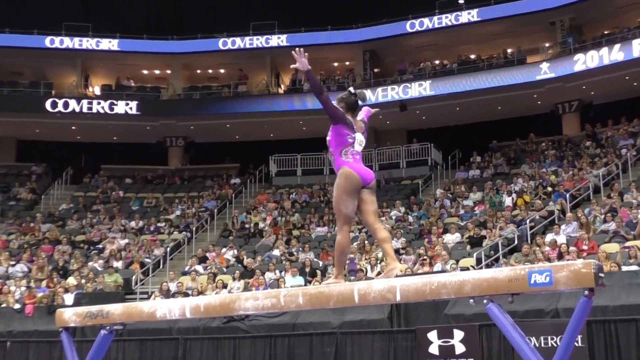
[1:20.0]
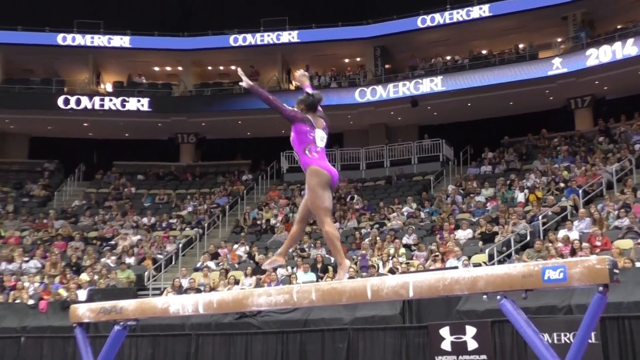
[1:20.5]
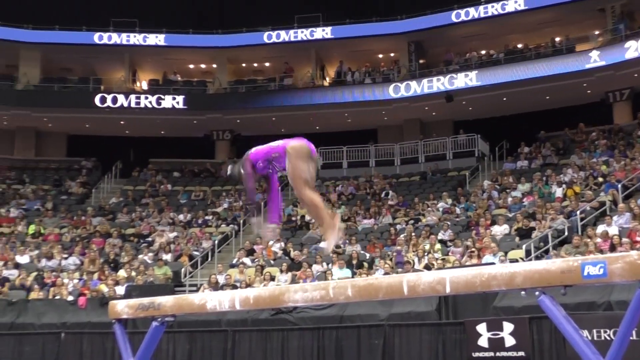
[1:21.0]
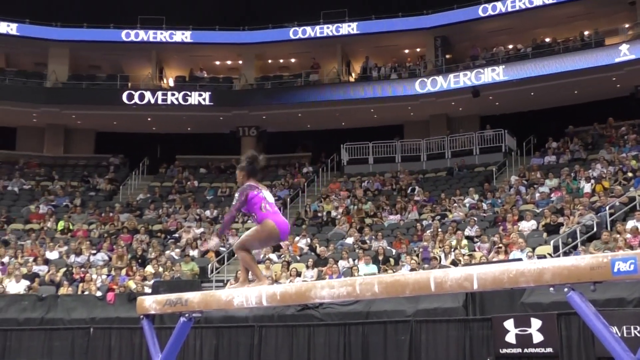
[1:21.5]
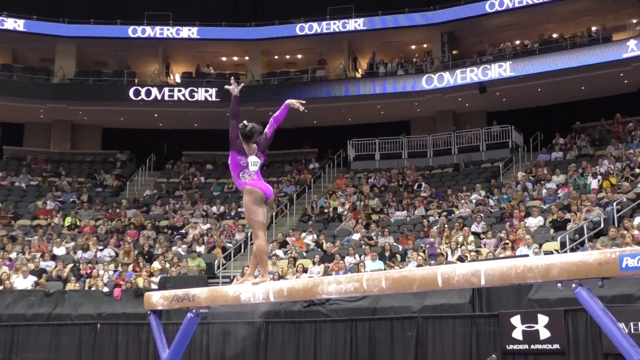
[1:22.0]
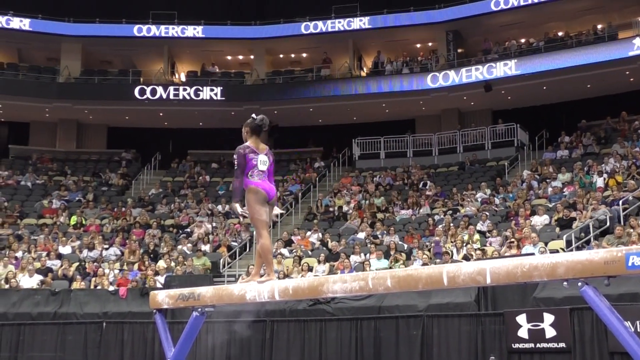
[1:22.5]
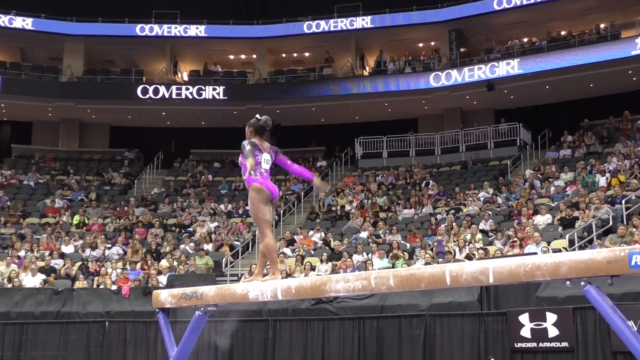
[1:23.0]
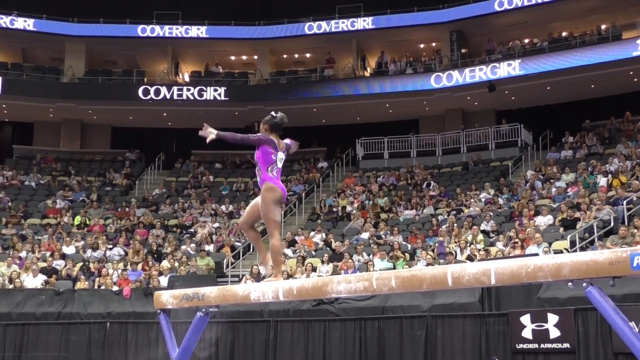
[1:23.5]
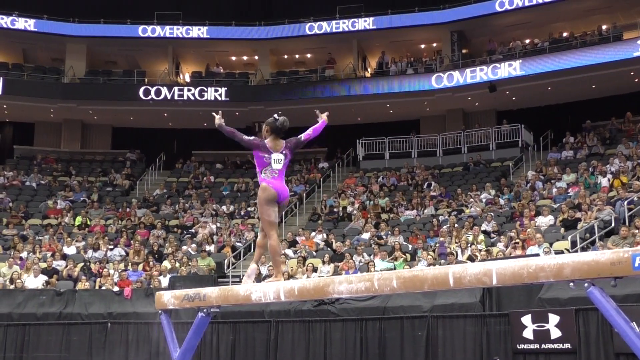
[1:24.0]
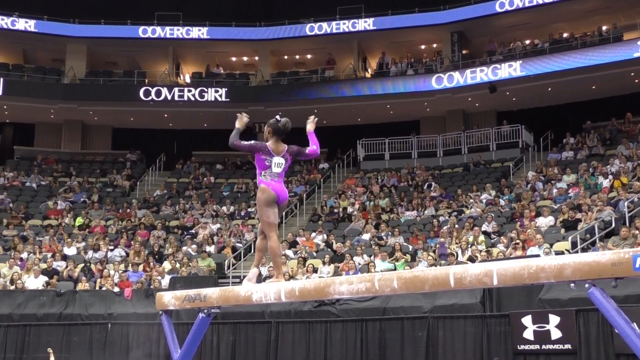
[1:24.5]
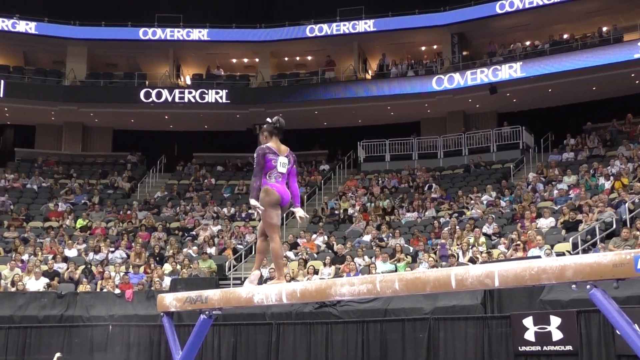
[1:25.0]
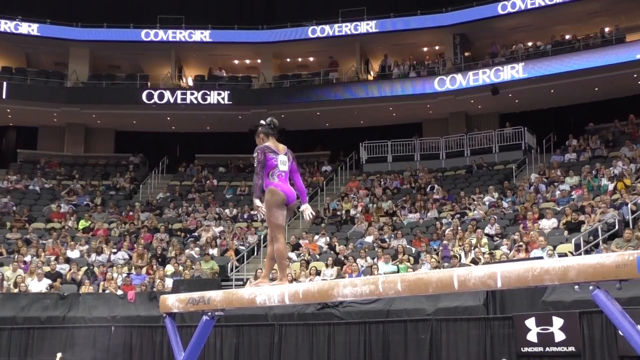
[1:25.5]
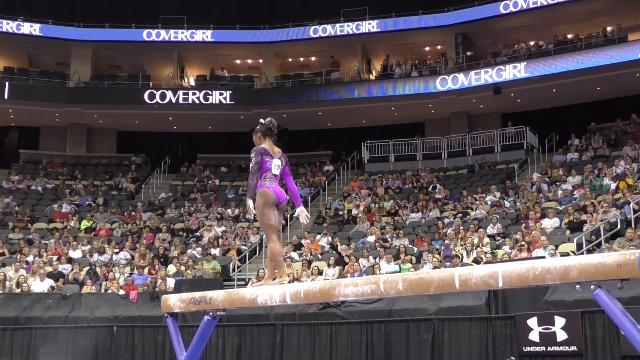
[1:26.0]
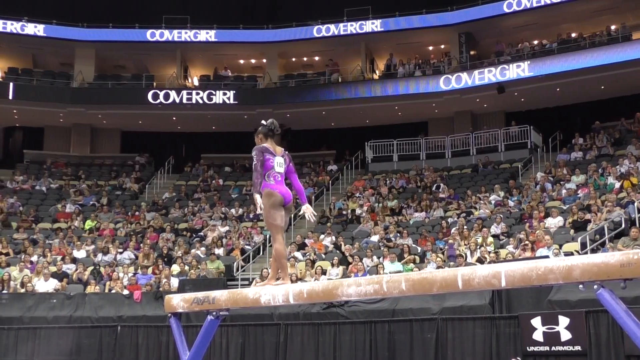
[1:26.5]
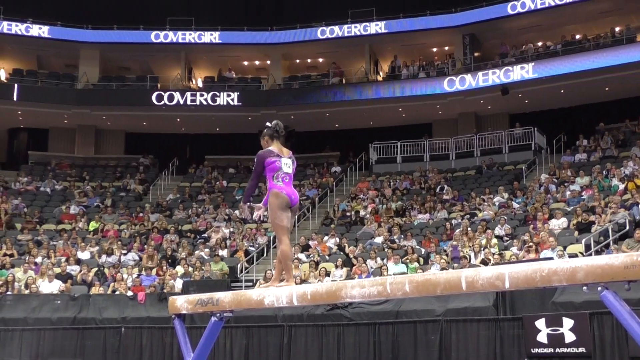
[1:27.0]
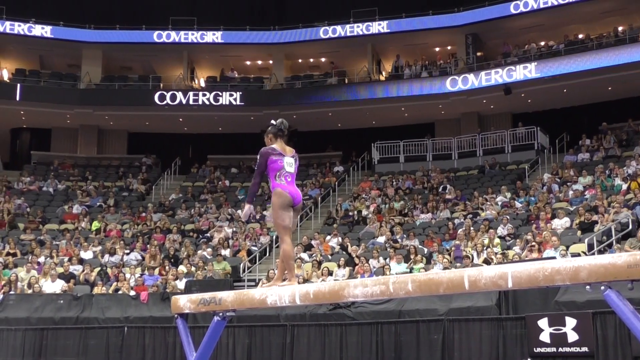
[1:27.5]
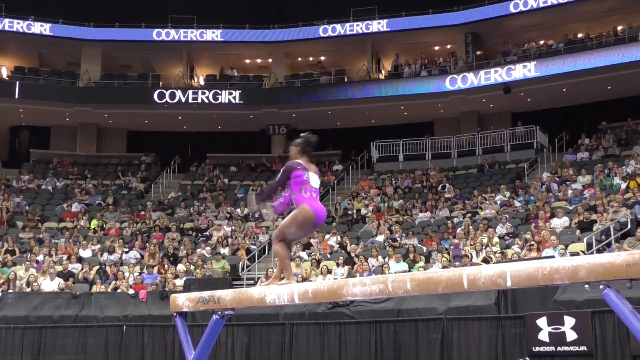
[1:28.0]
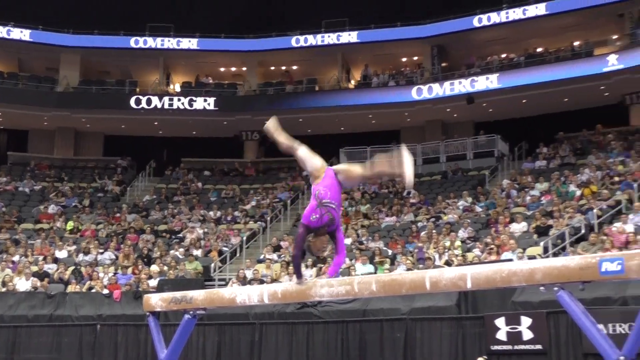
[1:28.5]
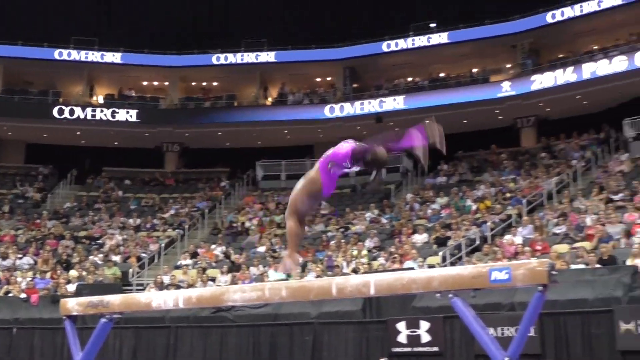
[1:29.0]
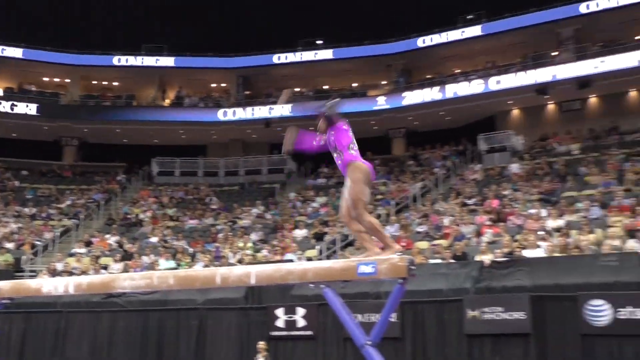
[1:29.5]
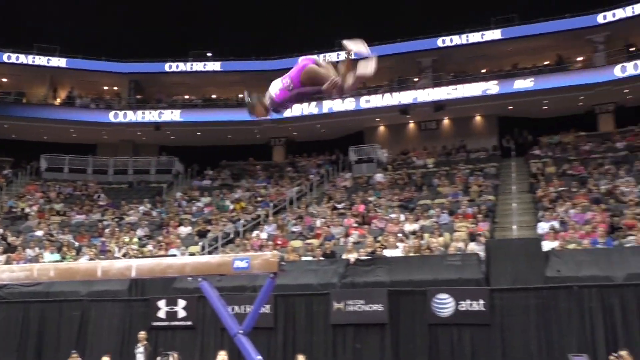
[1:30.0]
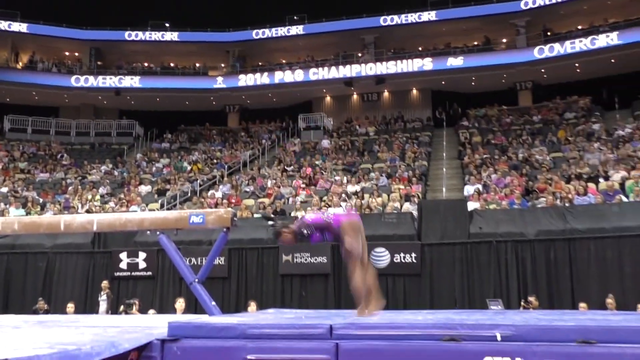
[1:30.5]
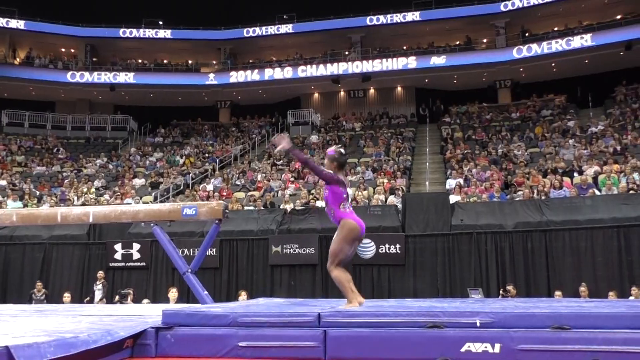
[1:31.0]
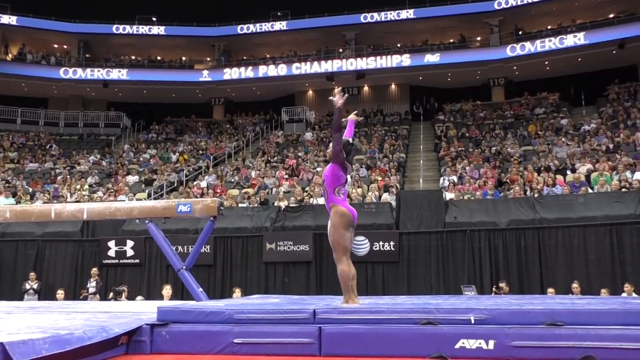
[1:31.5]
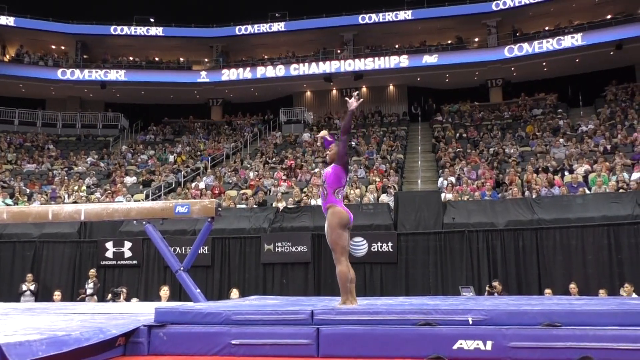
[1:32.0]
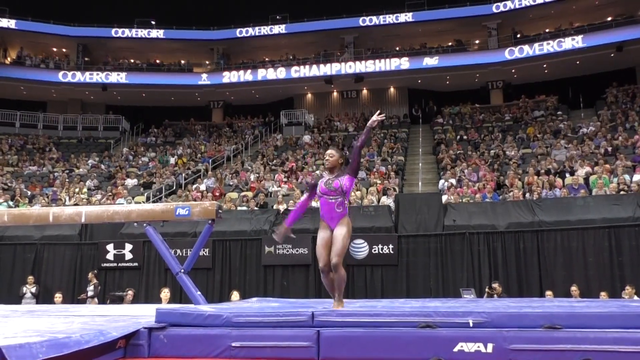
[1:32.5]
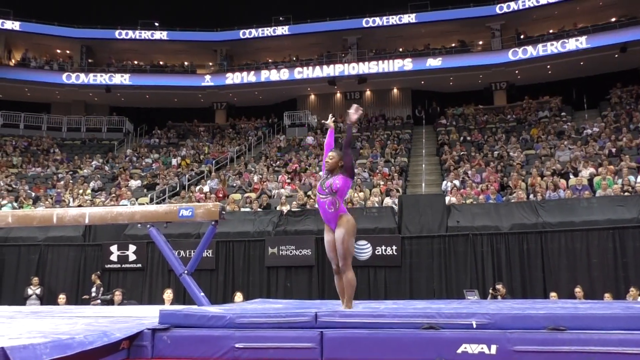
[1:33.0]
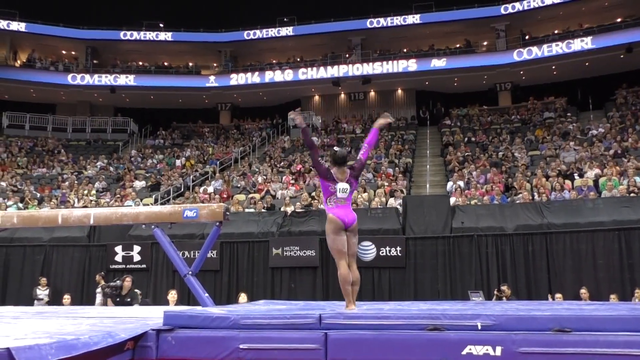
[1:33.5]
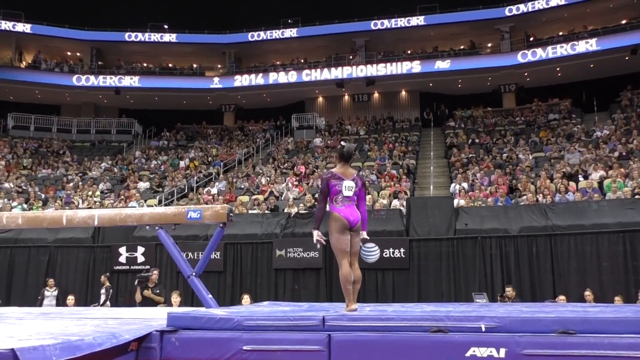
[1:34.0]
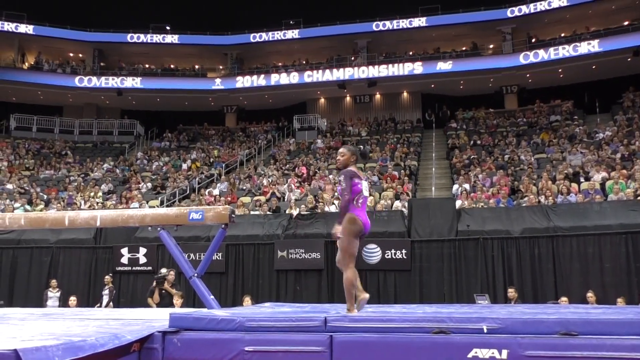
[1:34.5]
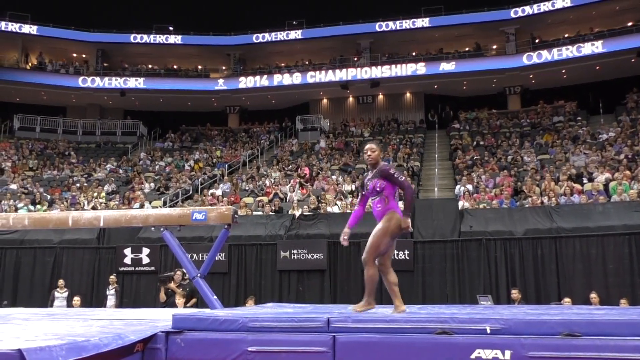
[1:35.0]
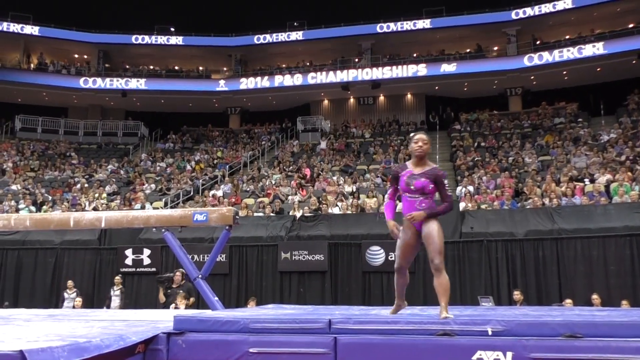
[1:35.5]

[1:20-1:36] She goes into a tucked front flip with her knees bent, followed by a slight moment of showmanship and arm movements, then launches into a final tucked double backflip right off the end of the balance beam, ending the routine. She sticks her landing on the blue mat and does her final poses to each side with arms overhead. The crowd is cheering, and in a slightly wider-angle view, some of the other competitors are also cheering. Between the two Covergirl signs, text reads "2014 P&G Championships". Where the videographers and other gymnasts are standing, a black curtain surrounds that part of the main competition area.